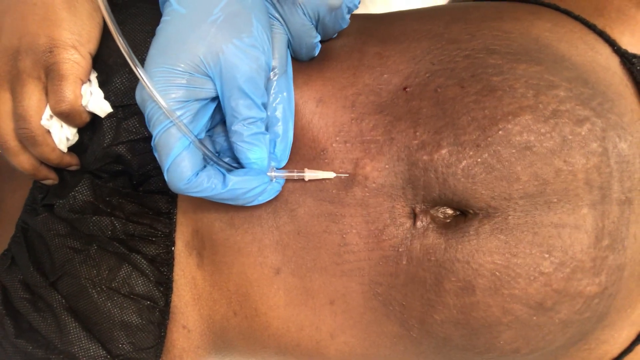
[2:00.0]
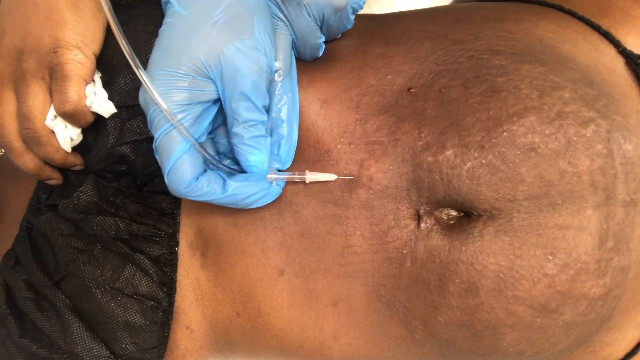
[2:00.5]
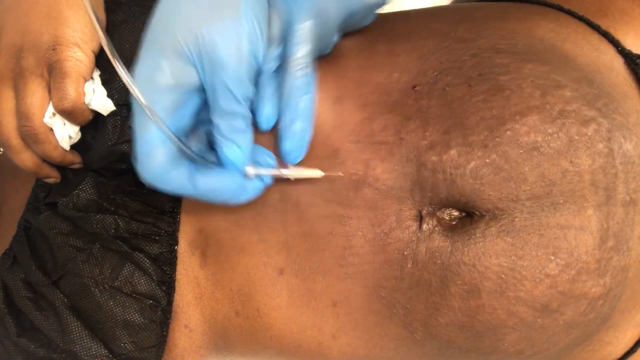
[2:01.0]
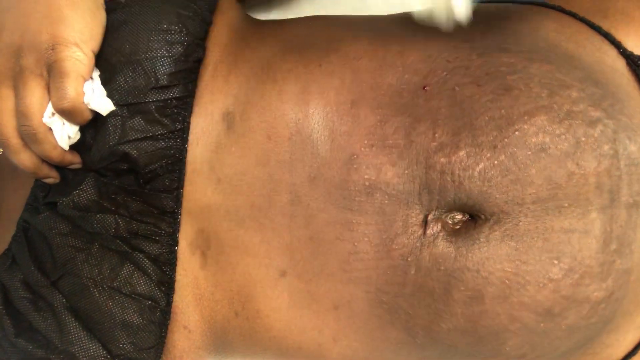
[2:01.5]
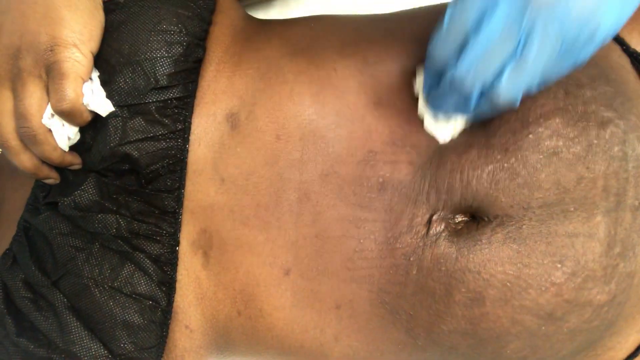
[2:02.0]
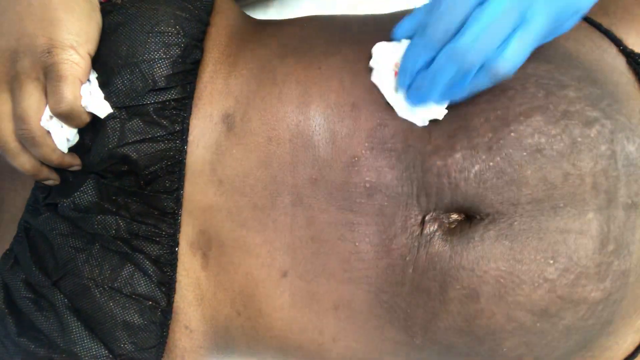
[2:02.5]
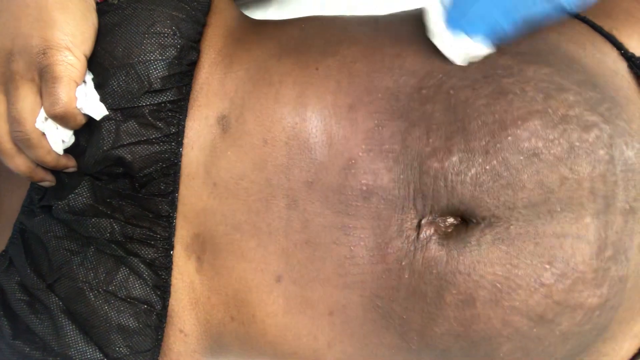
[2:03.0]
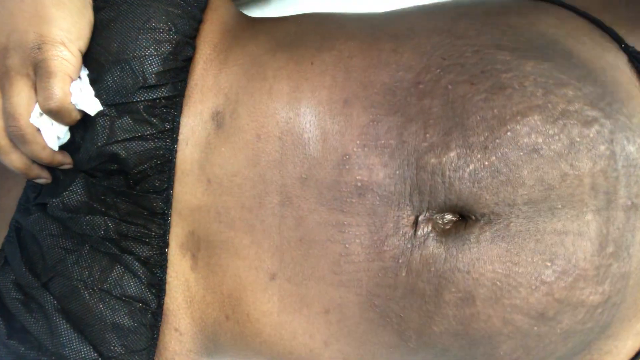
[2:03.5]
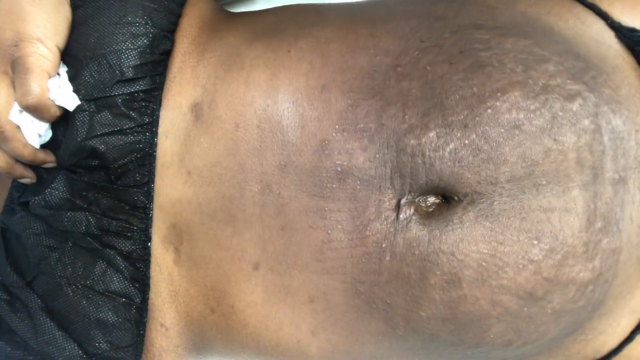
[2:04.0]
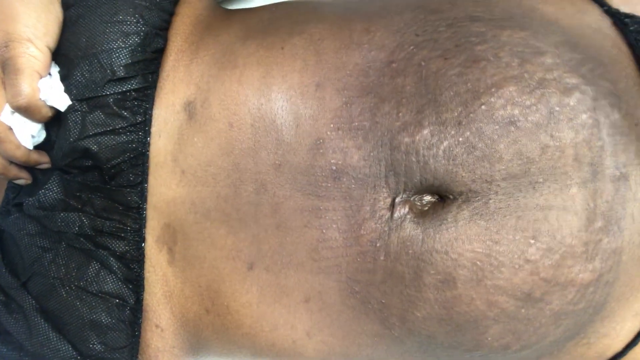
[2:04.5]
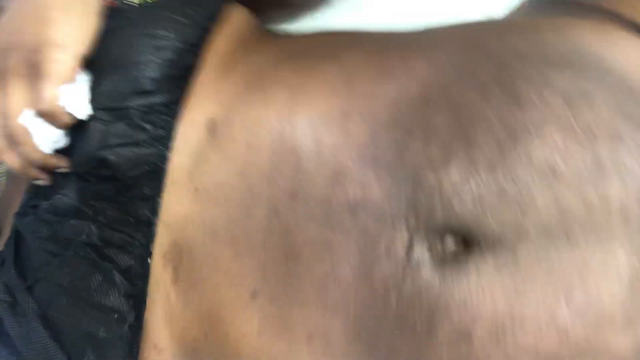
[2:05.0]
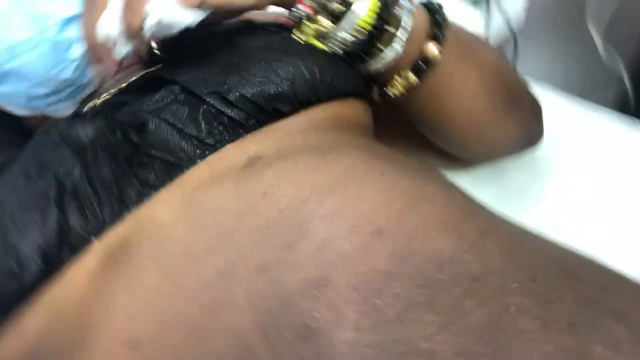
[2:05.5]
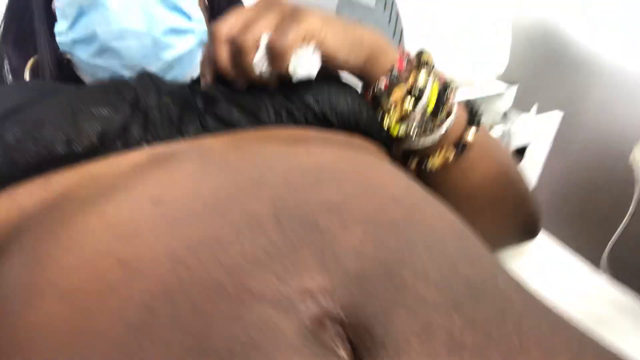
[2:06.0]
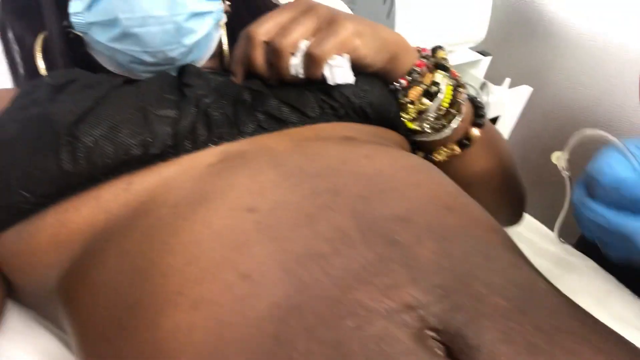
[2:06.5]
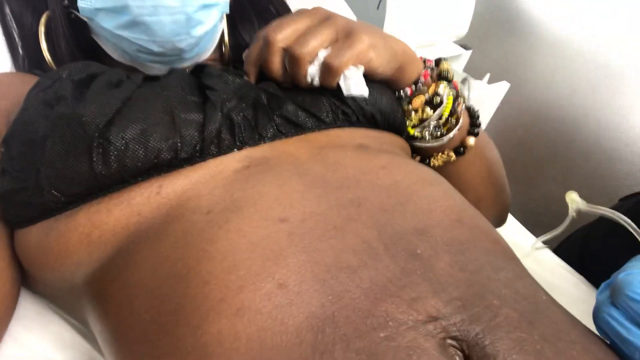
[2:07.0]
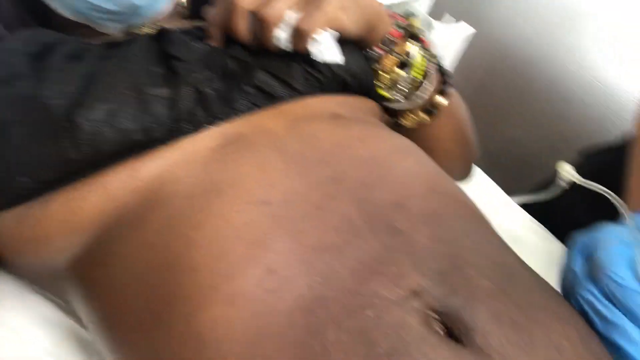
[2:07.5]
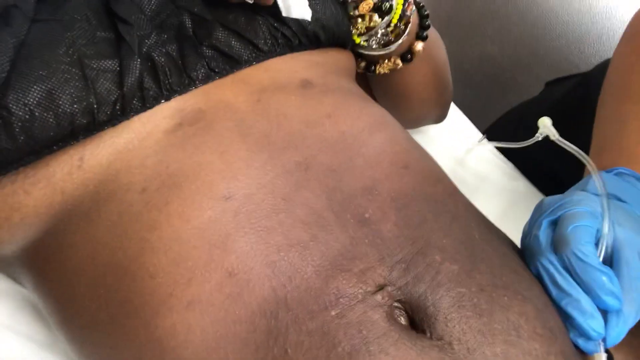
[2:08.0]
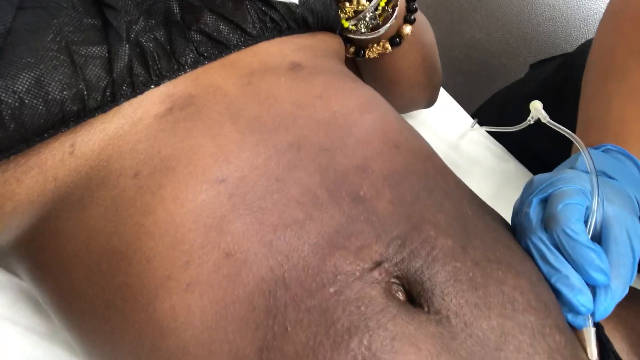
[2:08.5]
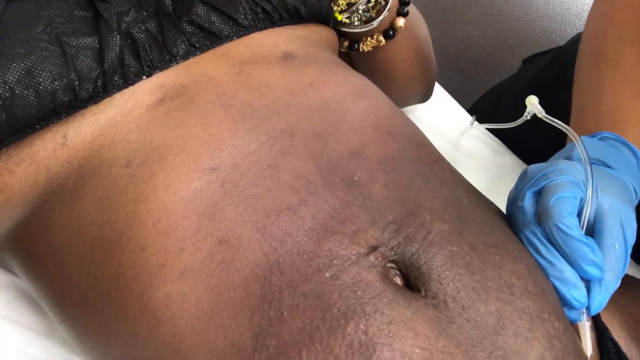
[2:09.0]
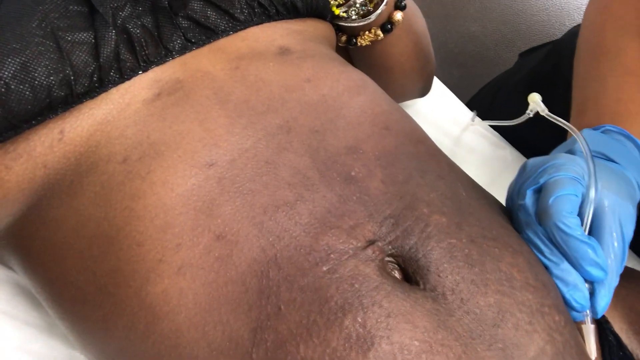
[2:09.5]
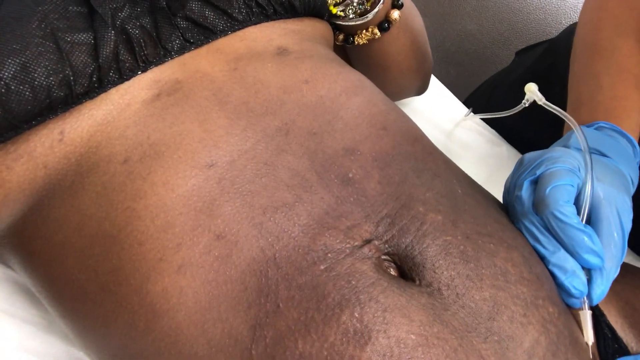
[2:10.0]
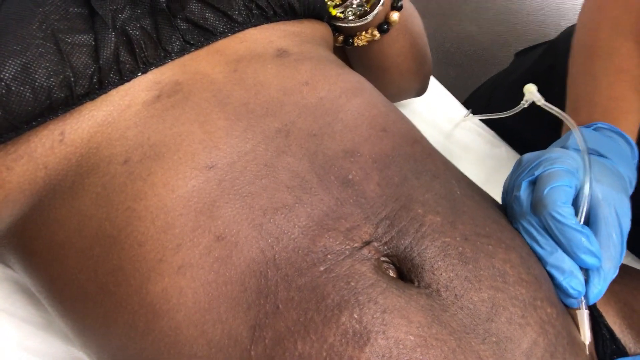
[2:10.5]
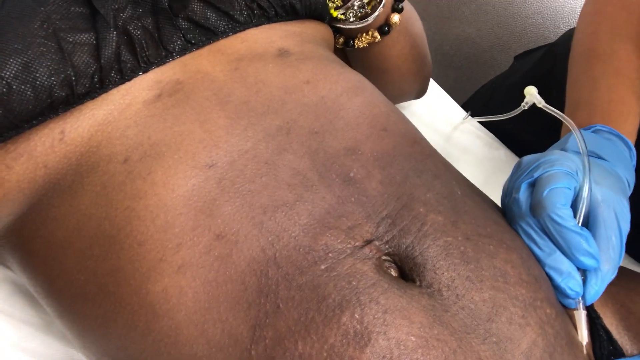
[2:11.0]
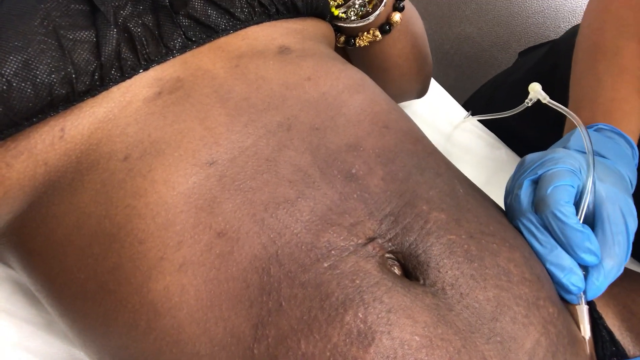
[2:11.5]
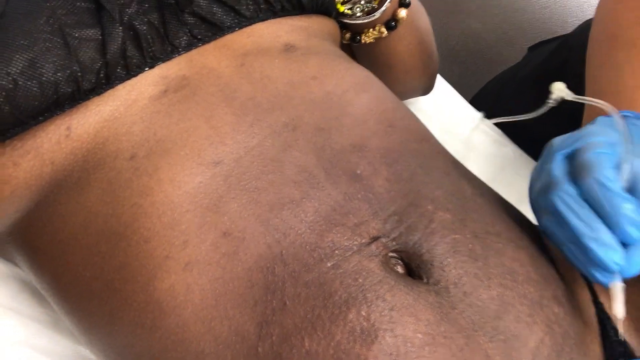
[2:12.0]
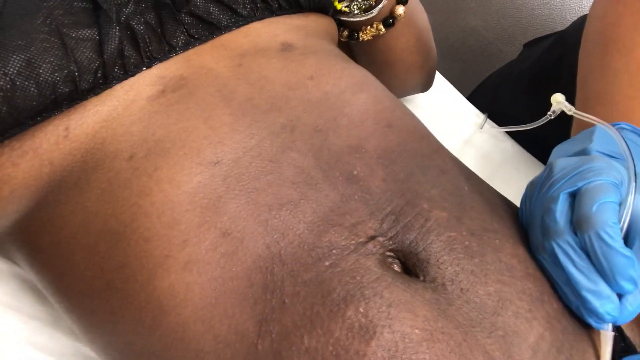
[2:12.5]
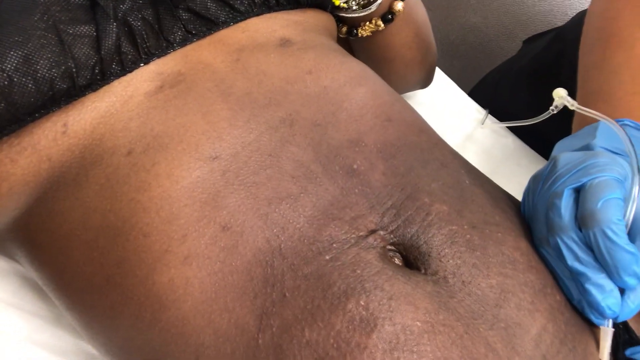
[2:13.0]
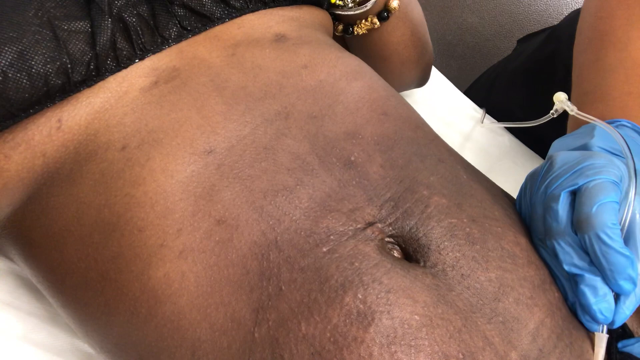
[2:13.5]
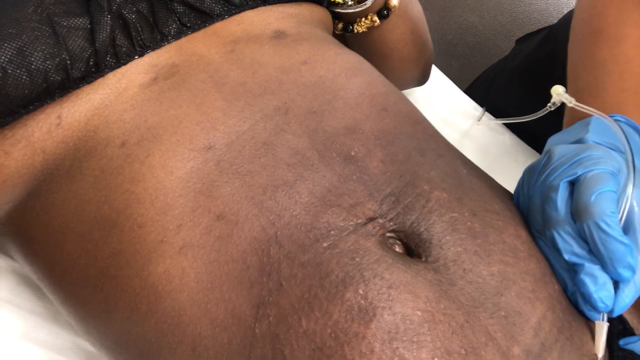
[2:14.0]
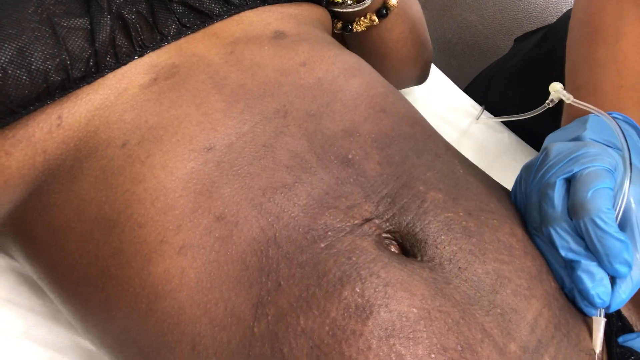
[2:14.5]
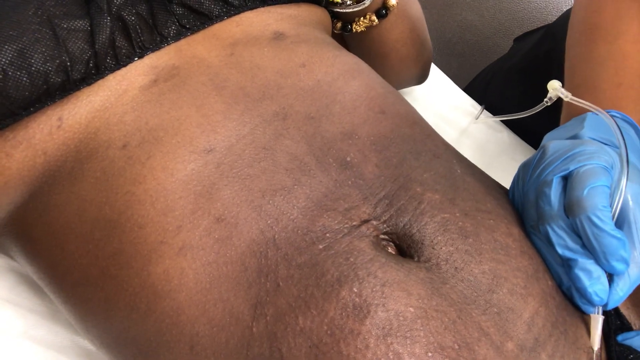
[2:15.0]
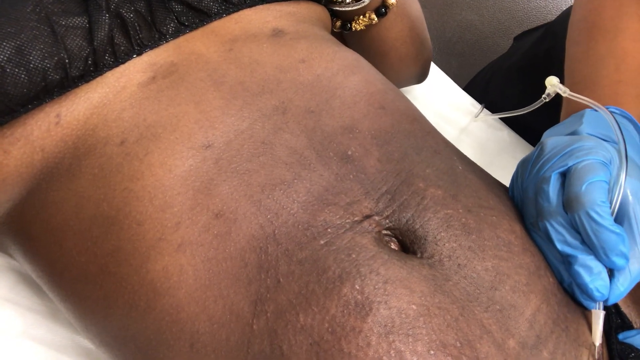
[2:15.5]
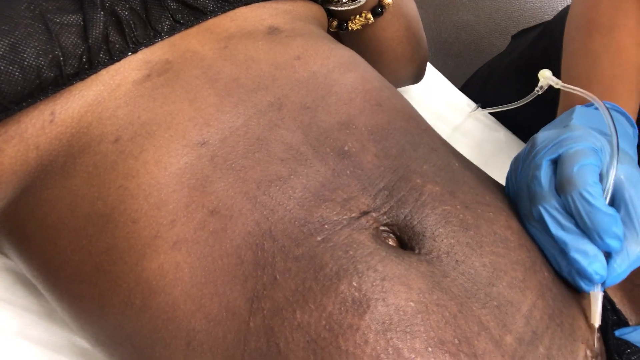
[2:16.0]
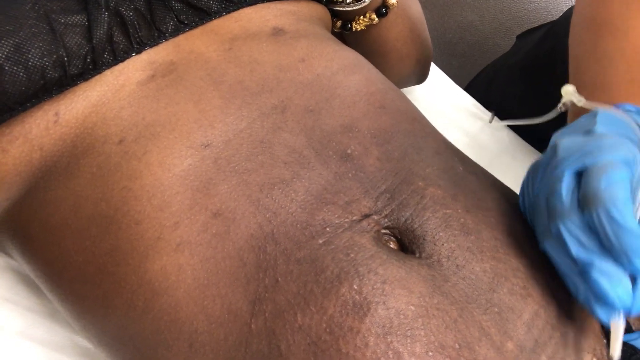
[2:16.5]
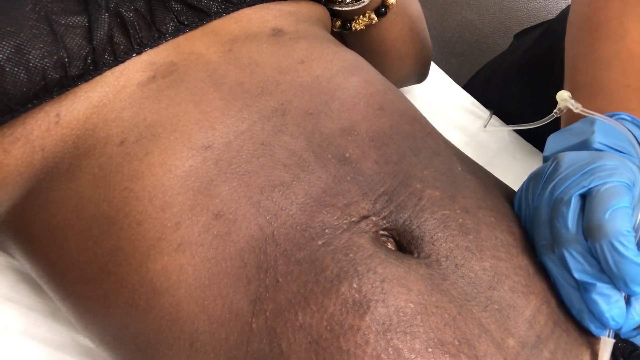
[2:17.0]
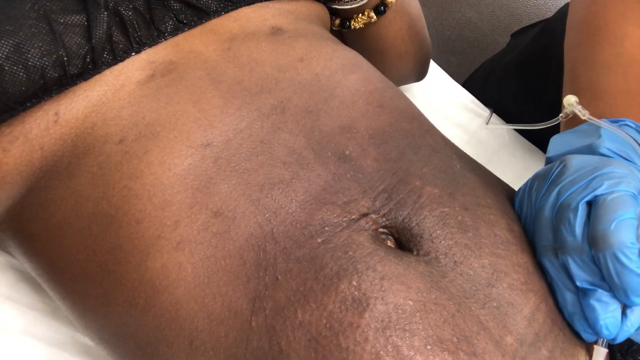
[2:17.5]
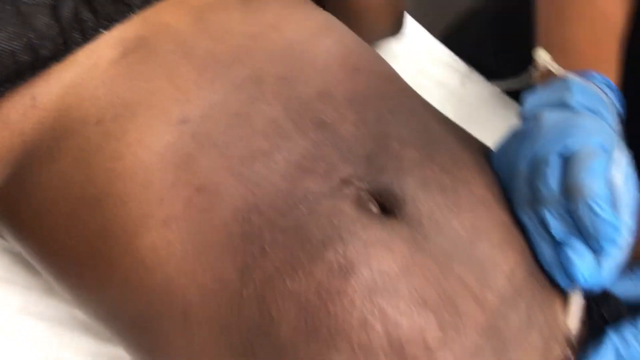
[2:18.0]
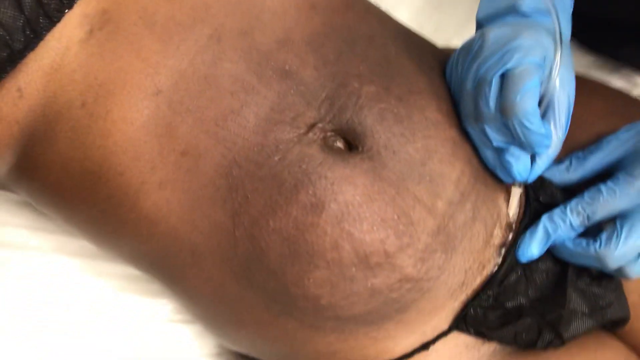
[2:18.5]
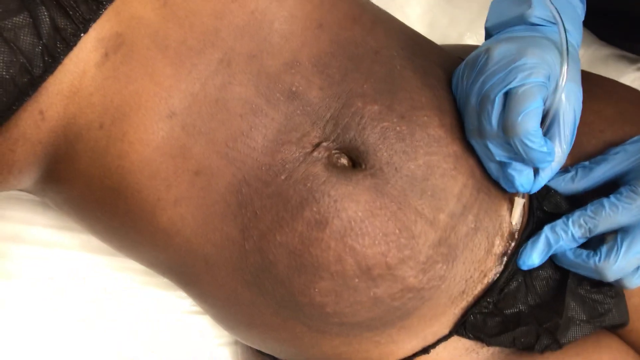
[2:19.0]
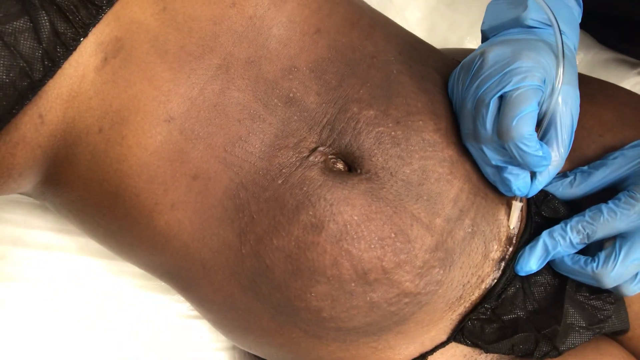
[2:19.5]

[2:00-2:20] A blue-gloved hand holds a needle with a white tip attached to a flexible rubber hose, injecting a brown-skinned woman in a black fabric bra and fabric thong who appears to be lying on an operating table. As the doctor pulls the needle out, they dab the upper section of her skin to remove a small speck of blood, and then the camera switches to face the woman's chest area and face. This shows that the person holding the tissue is not an assistant but the patient herself, indicating she is awake for the procedure. She wears a series of six or seven bead bangle bracelet bands on the same arm that holds the tissue. Slightly out of scene, the doctor injects the needle again into an area quite close to the woman's groin, possibly between the stomach and groin where the thigh connects, and appears to have one hand on her underpants. The view then moves a little to the right, showing the doctor injecting just under the rim of her underpants, near her groin, at the bottom of her stomach.